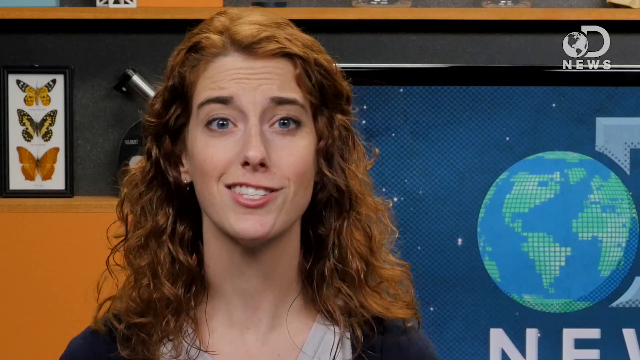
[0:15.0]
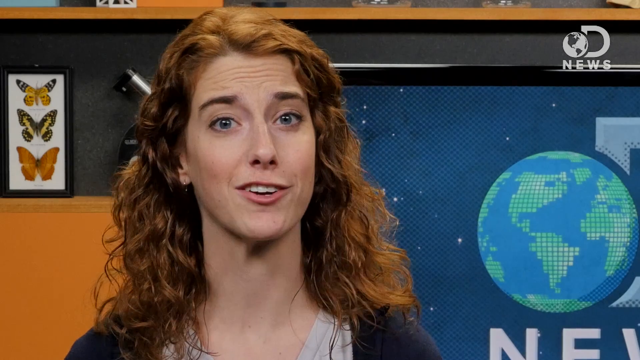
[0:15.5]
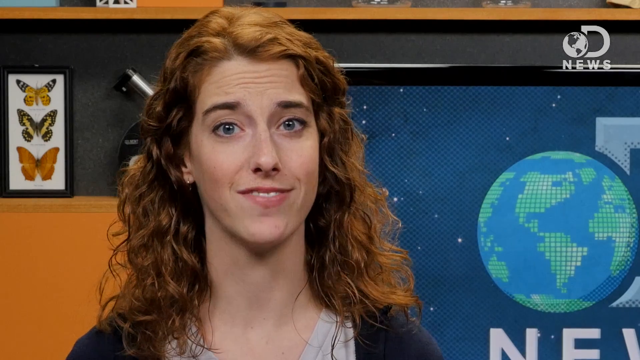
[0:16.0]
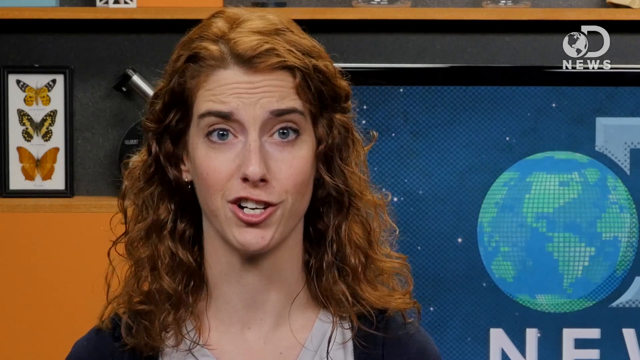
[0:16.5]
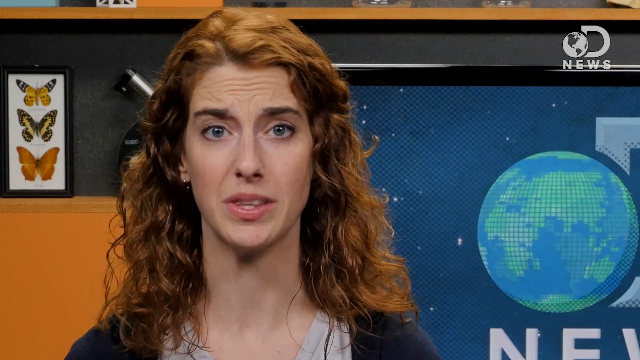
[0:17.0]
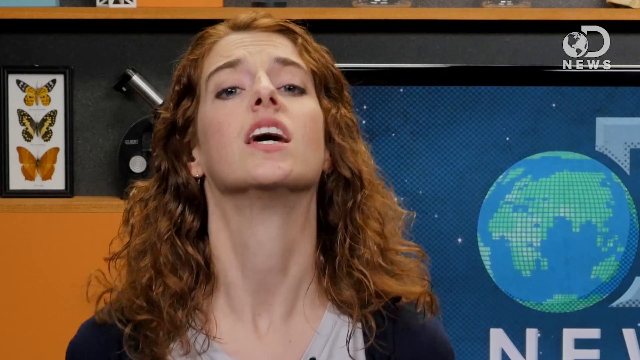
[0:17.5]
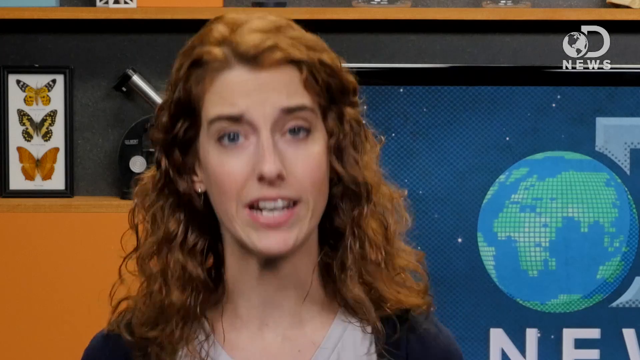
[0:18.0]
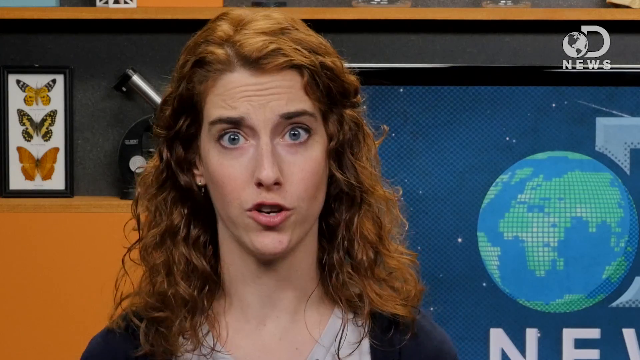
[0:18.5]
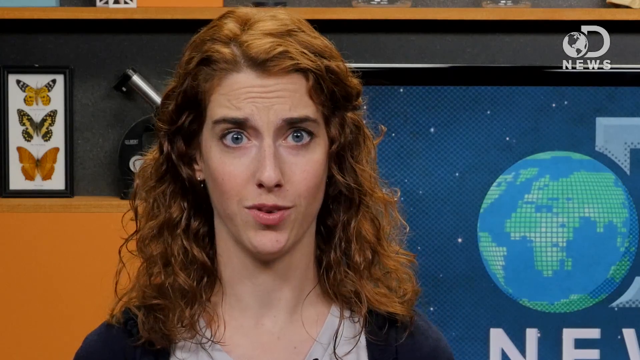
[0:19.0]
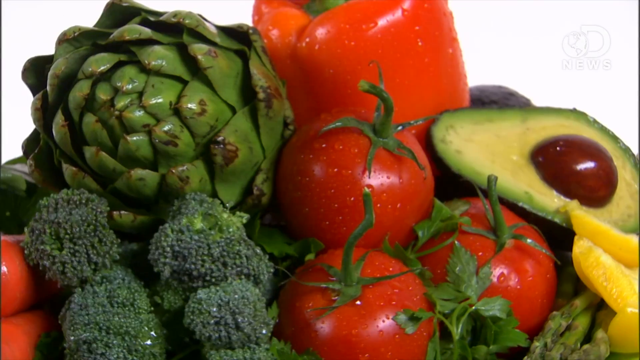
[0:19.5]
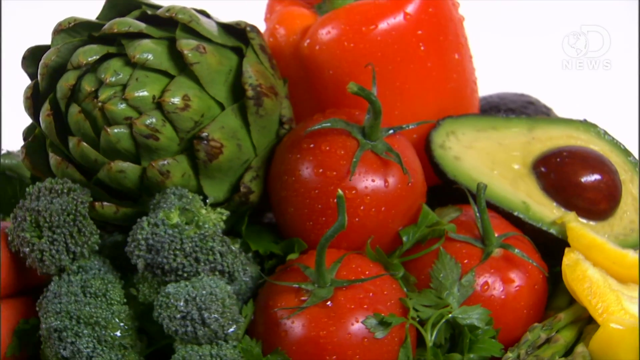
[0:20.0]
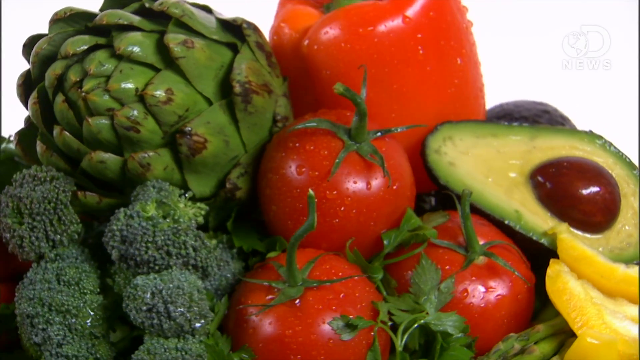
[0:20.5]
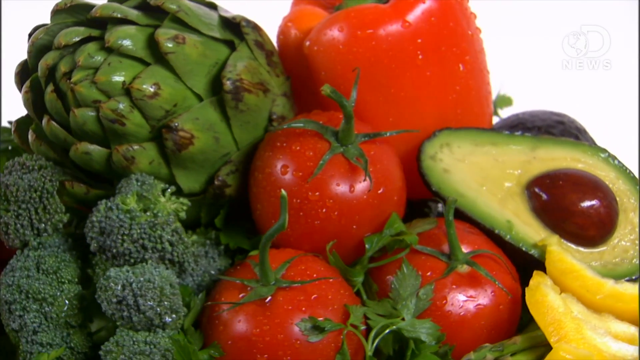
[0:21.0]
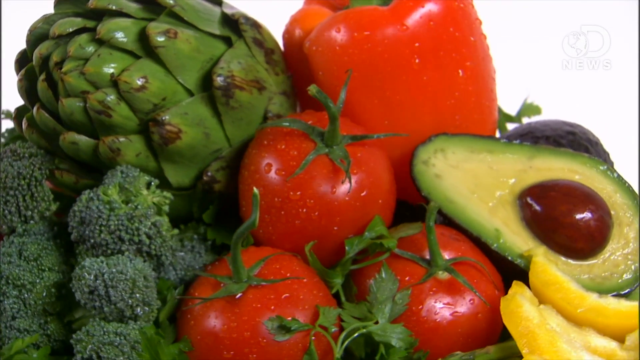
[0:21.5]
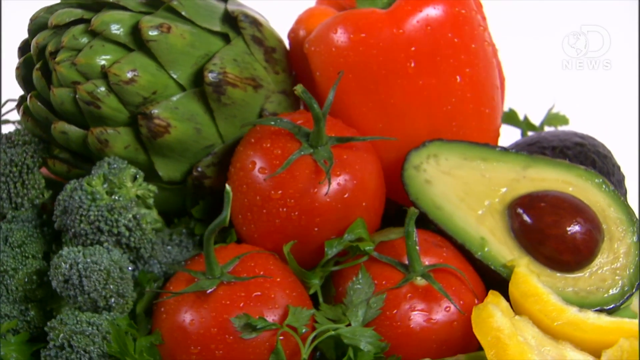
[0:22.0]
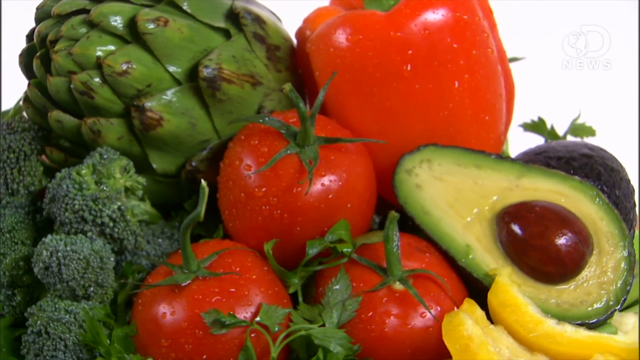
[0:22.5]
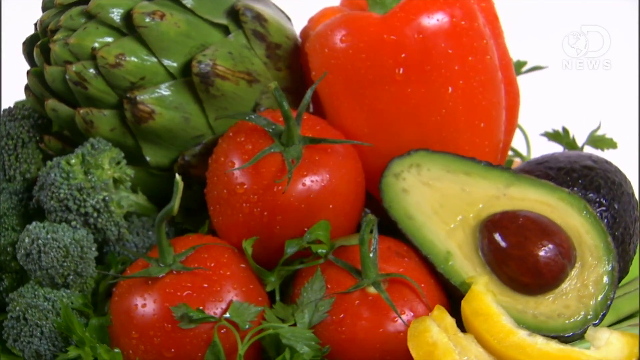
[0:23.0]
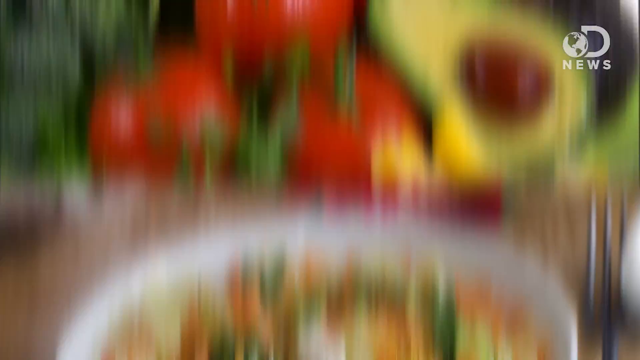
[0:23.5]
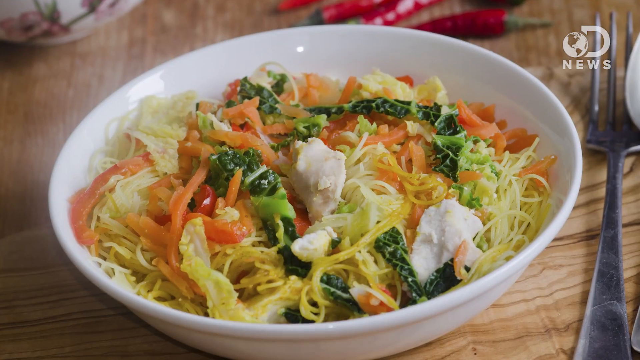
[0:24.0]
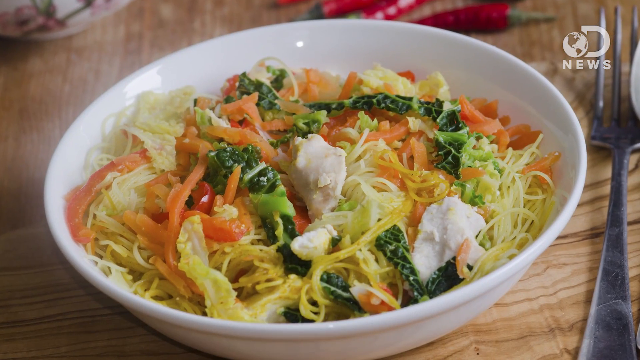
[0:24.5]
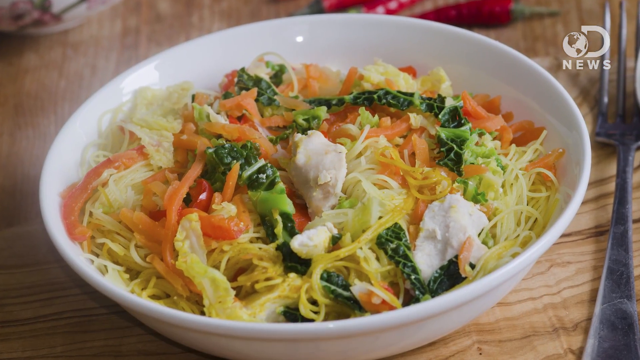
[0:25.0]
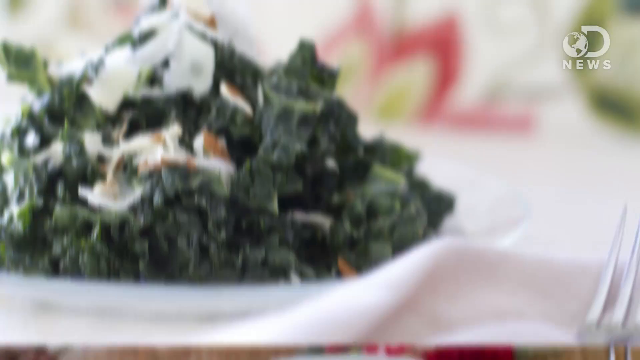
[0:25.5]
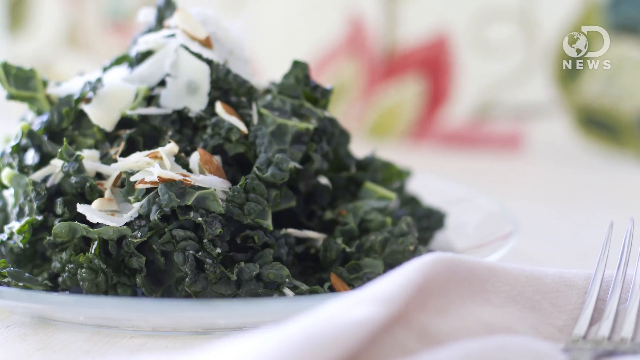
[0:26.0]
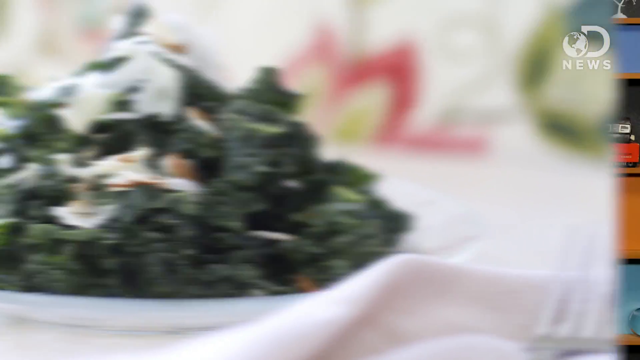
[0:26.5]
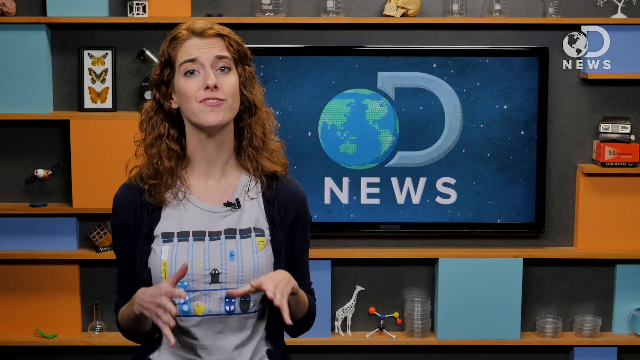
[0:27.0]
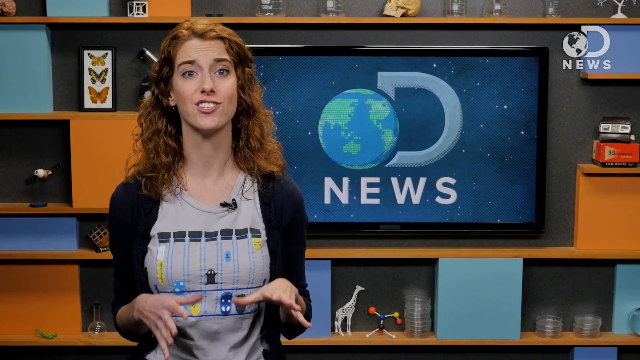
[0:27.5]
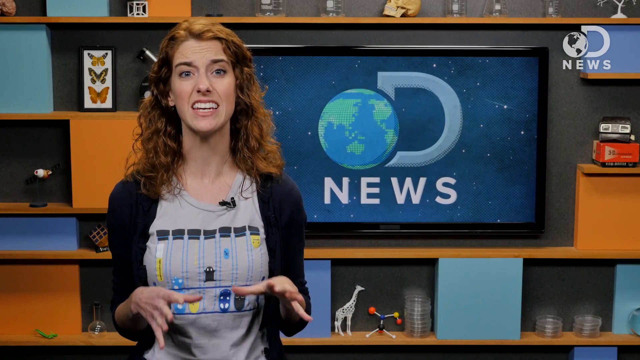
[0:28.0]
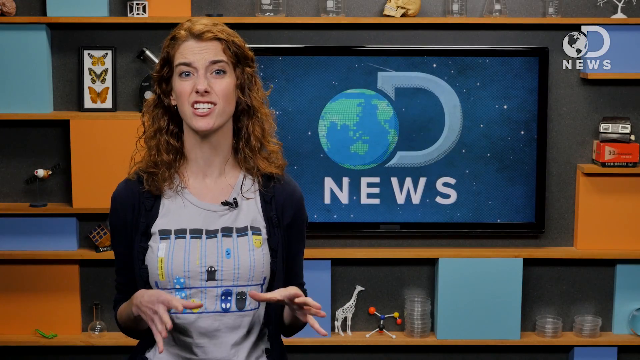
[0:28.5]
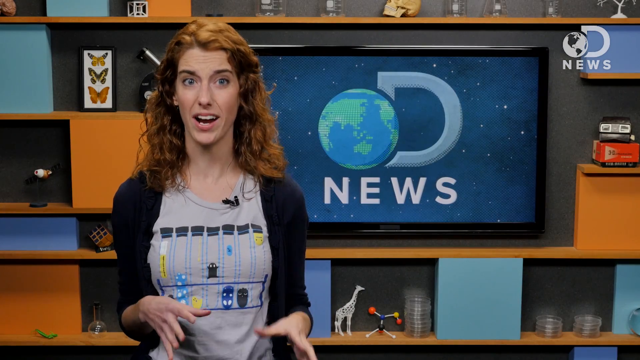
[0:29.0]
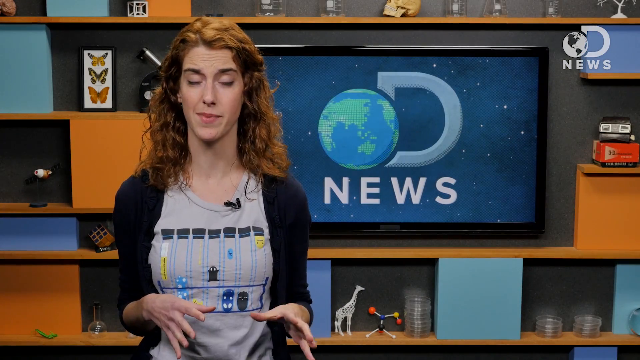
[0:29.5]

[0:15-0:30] A young woman with white skin, blue eyes and auburn-colored hair, wearing a black sweater and a gray t-shirt, talks to the camera and is very animated with her hands. The video cuts away from her face to show different food items in bowls, all apparently vegetables: avocados, tomatoes, broccoli, apparently some sort of fruits, and then a bowl of kale and another food. The camera pans back to the woman as she continues talking. She looks to be in some kind of studio, with a large TV screen behind her showing a logo of a spinning globe.